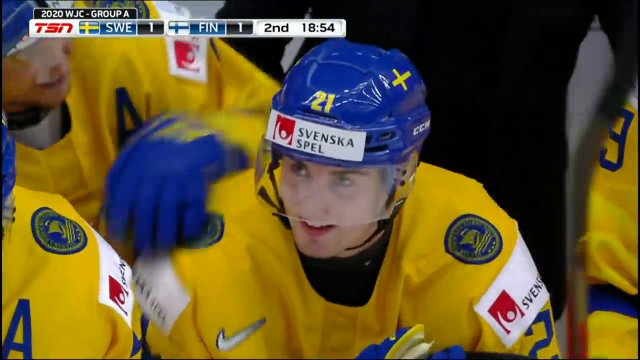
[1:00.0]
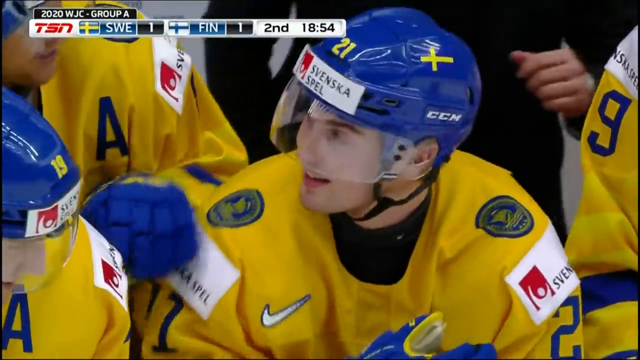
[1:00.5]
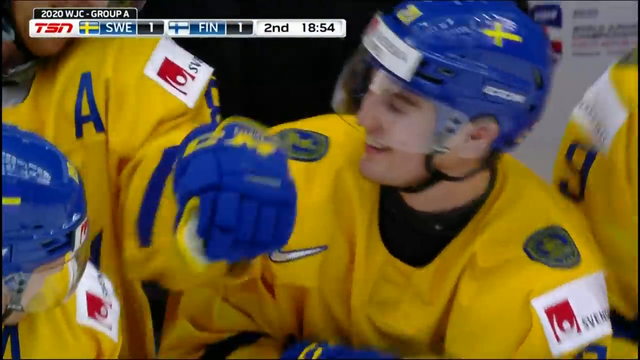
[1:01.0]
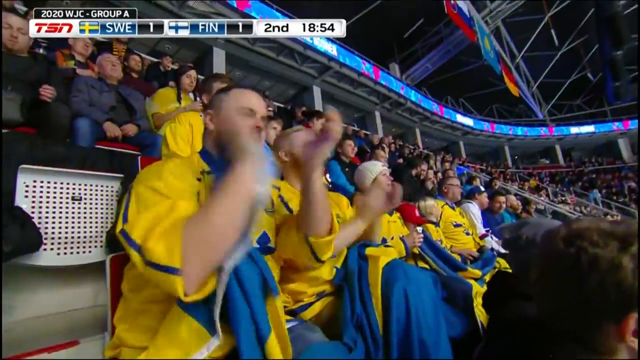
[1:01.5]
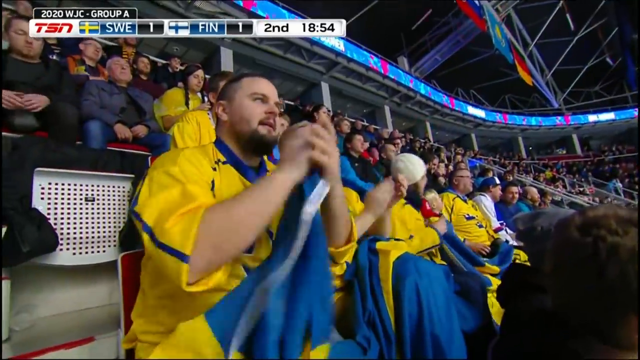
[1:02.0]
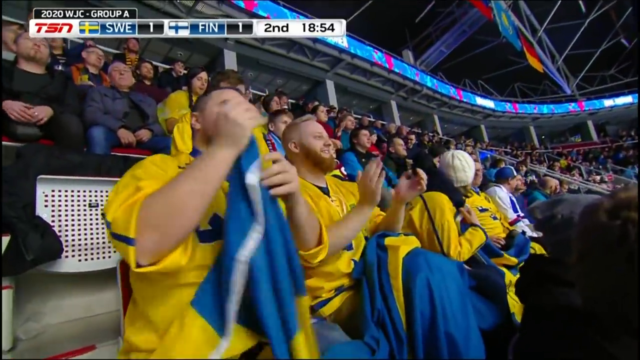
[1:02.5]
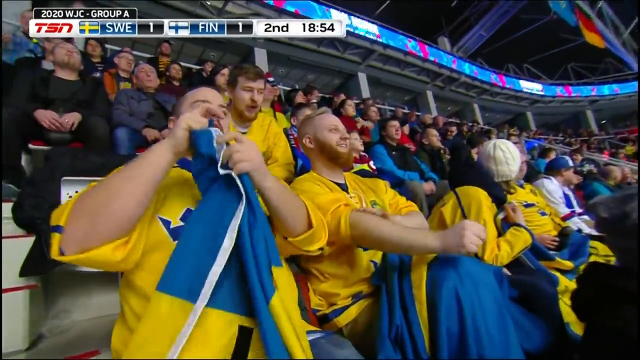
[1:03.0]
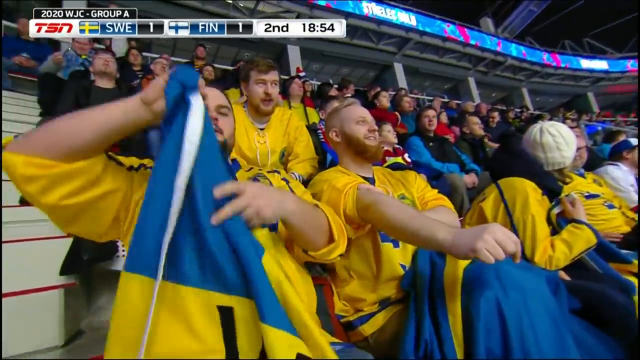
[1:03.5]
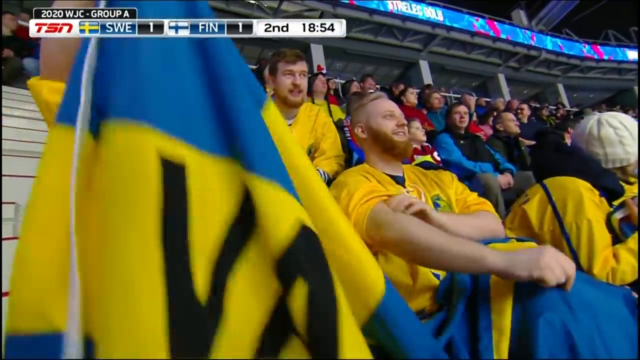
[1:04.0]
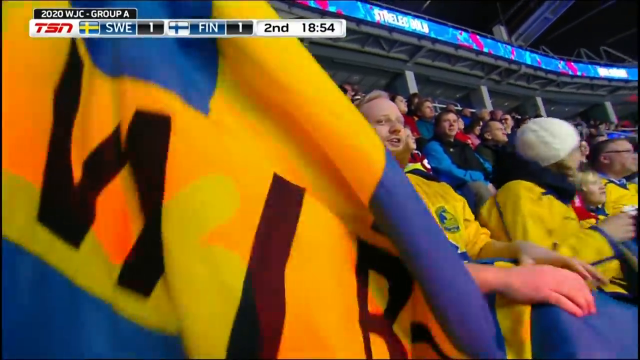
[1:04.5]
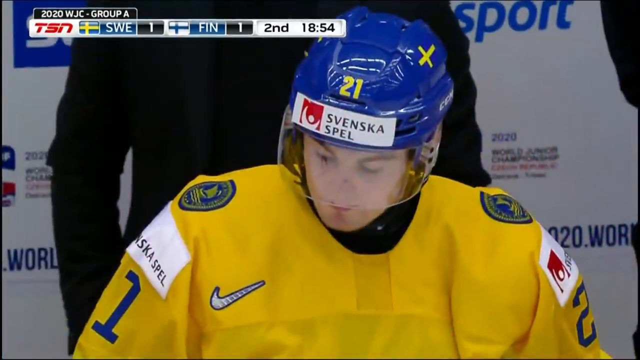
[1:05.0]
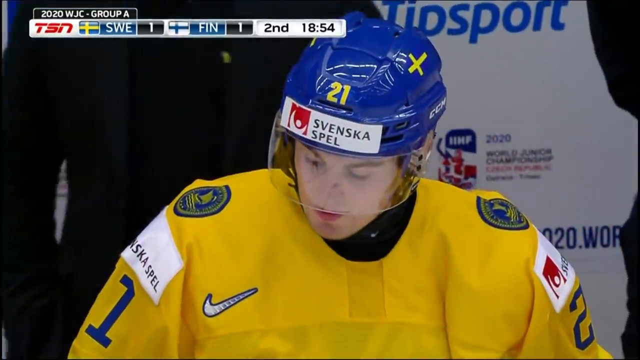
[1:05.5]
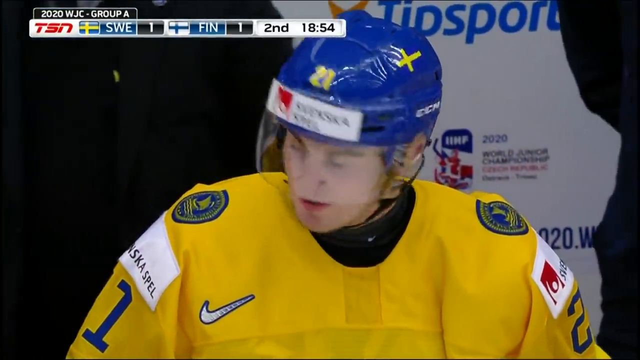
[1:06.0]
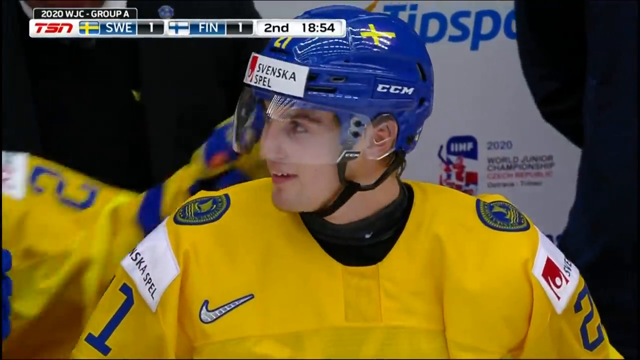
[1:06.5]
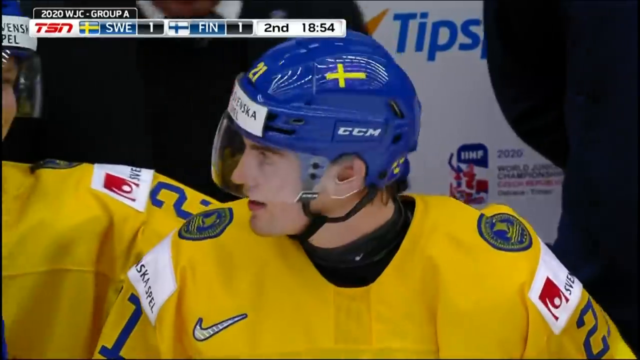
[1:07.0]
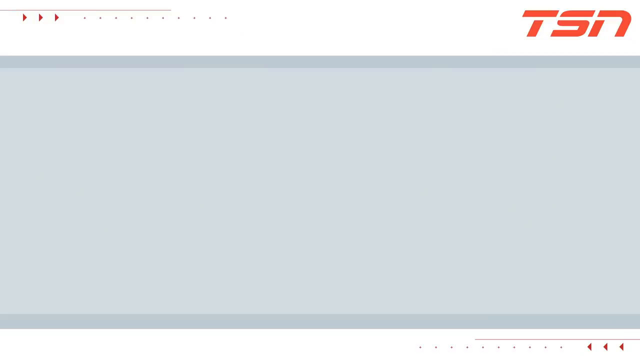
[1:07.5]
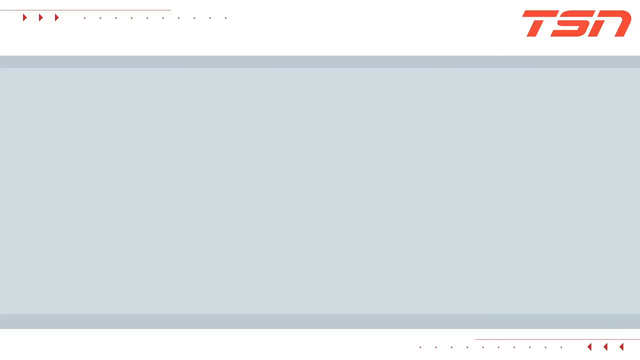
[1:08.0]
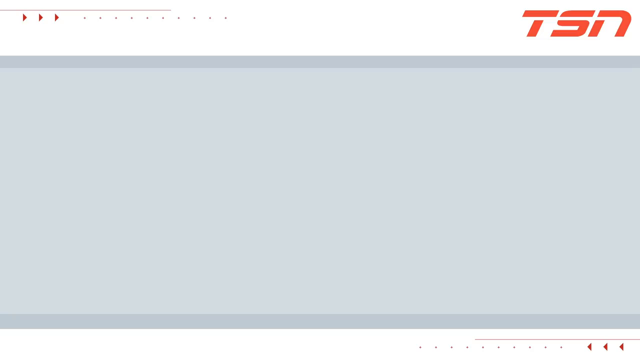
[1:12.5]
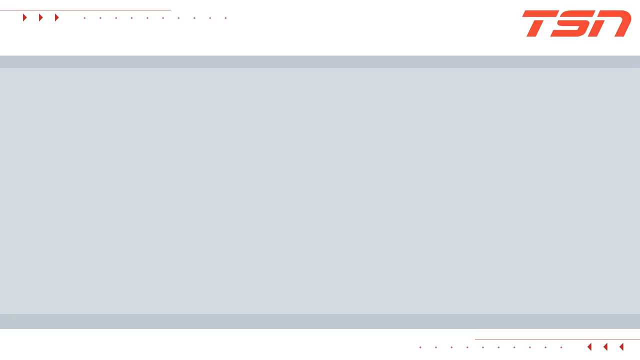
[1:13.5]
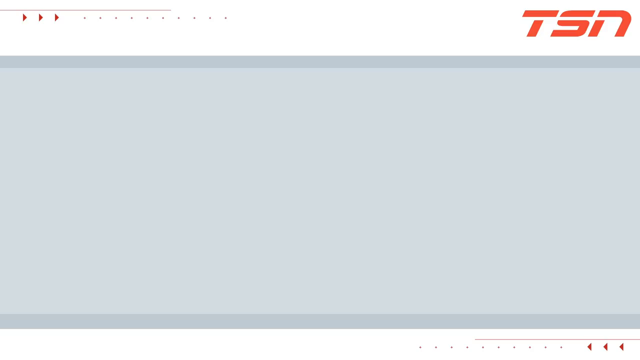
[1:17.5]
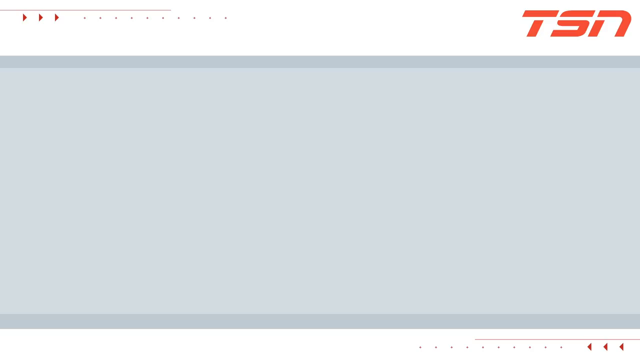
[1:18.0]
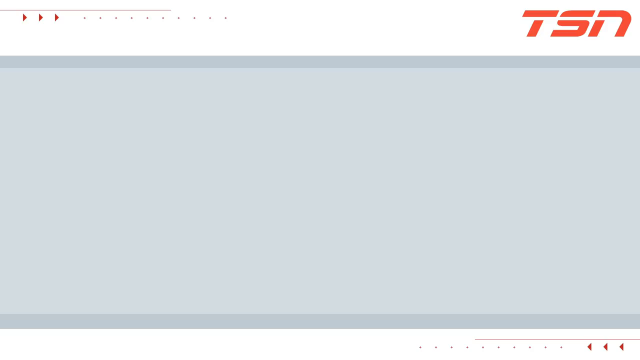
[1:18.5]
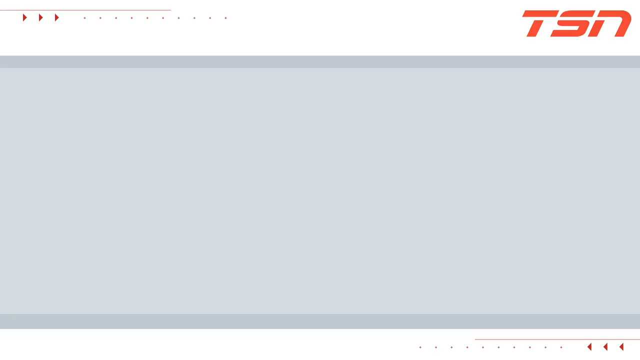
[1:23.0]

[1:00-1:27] Number 21 is still very excited and turns around to respond to his teammate, who is hugging him around the neck. A close-up shows Swedish fans in the crowd wearing jerseys and holding their flags, looking very pleased. The screen then cuts to what looks like a PowerPoint slide template, with the TSN logo in the top right and red arrows and gray dots in the top left of a top panel with a white background. Then comes a mostly gray blank screen with another white panel along the bottom containing red arrows pointing left and gray dots. The feed appears to have cut out, and the video stays on this blank gray screen for roughly the last 21 seconds.